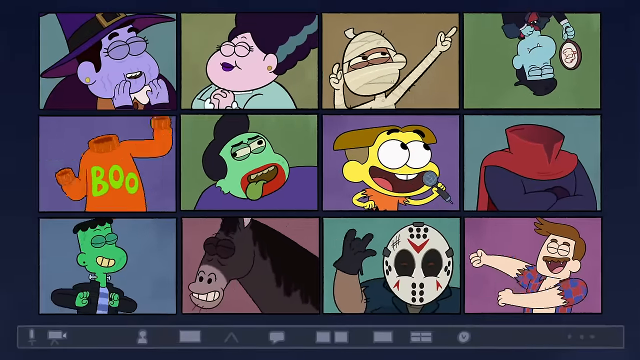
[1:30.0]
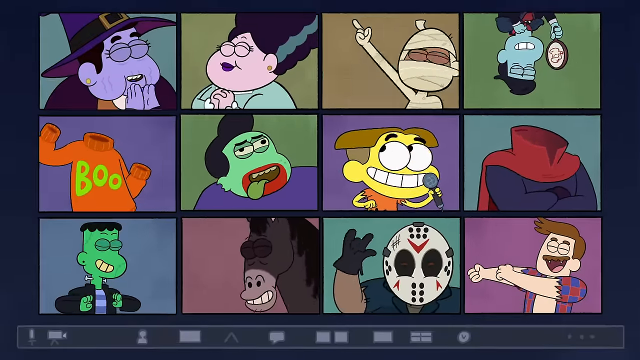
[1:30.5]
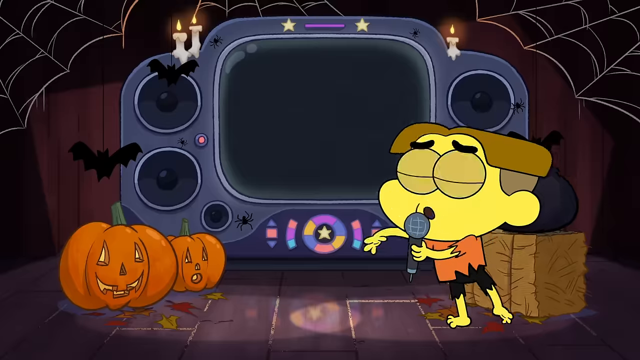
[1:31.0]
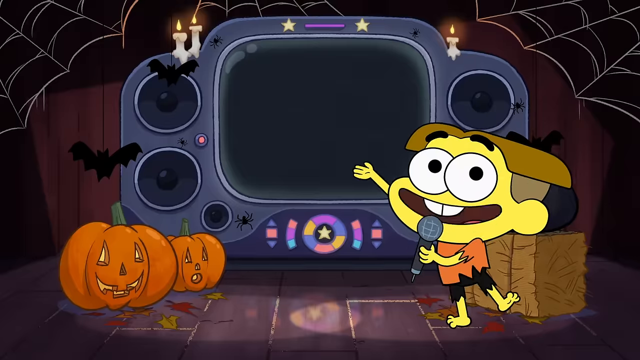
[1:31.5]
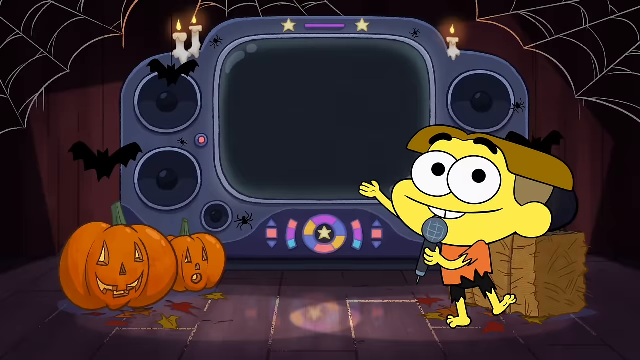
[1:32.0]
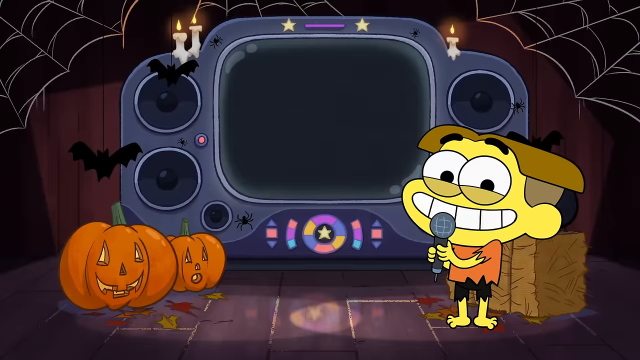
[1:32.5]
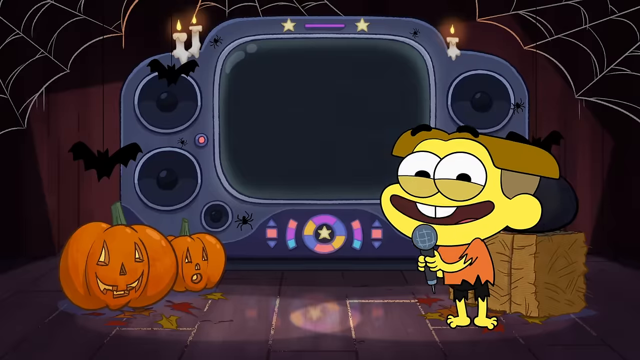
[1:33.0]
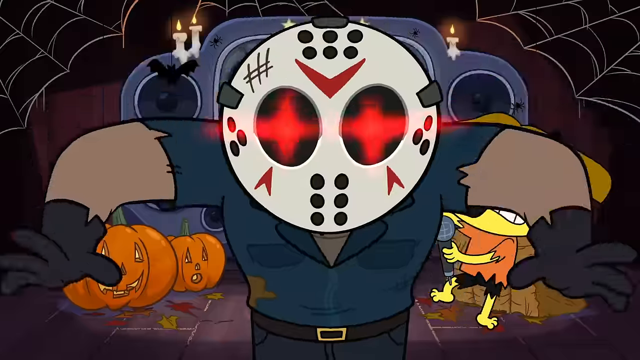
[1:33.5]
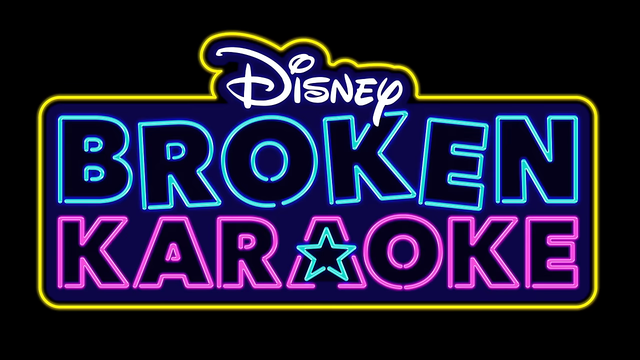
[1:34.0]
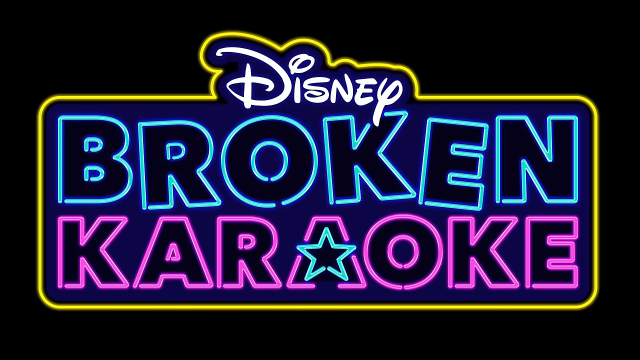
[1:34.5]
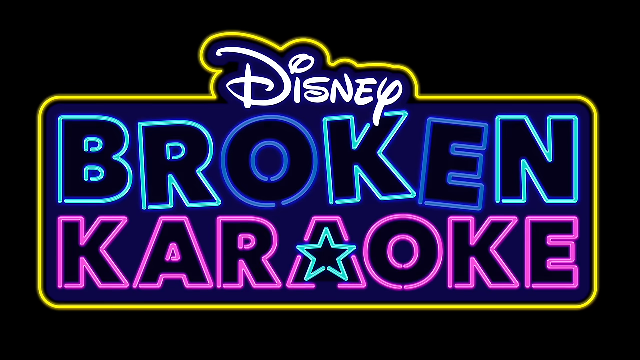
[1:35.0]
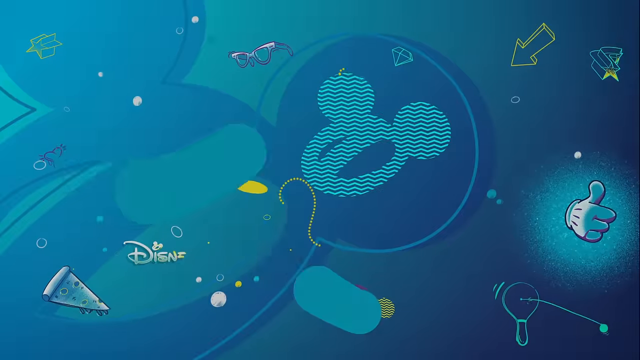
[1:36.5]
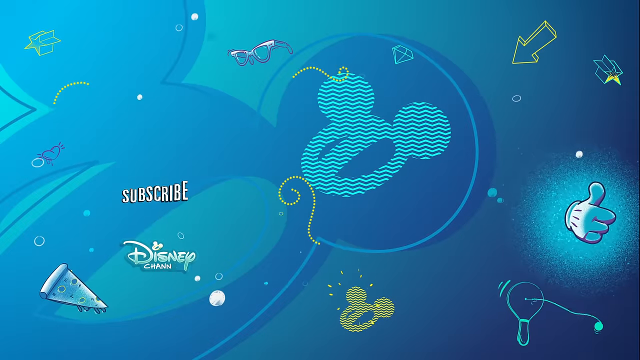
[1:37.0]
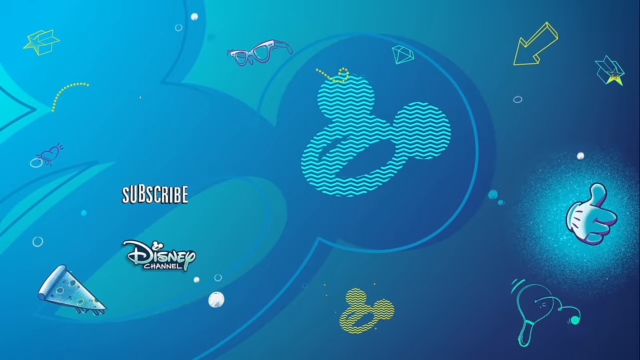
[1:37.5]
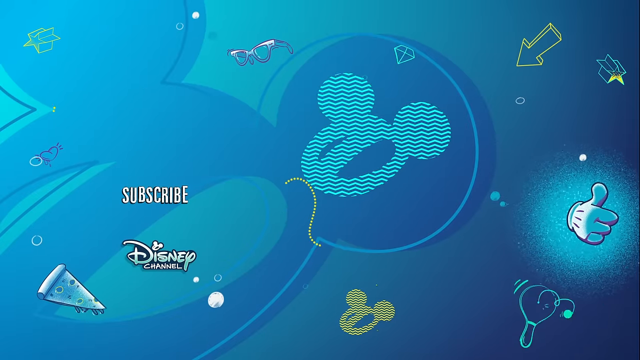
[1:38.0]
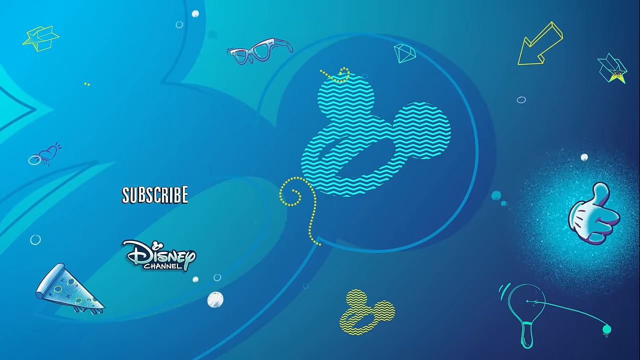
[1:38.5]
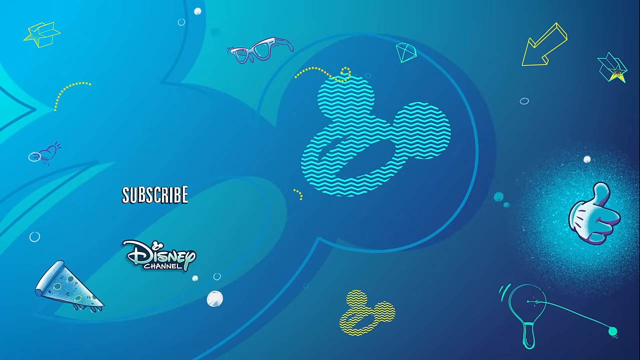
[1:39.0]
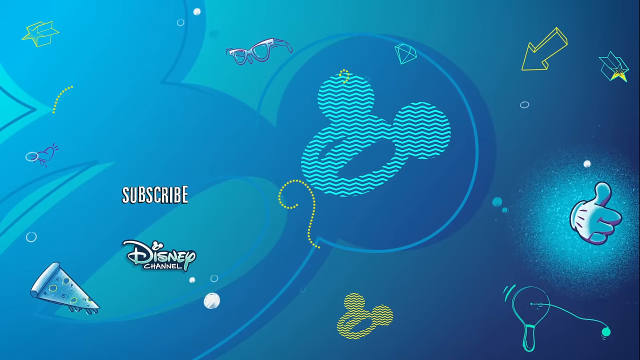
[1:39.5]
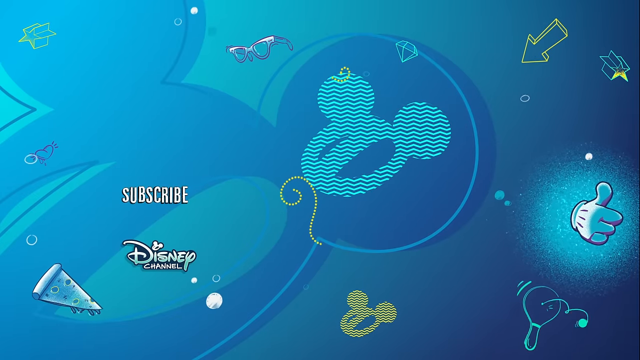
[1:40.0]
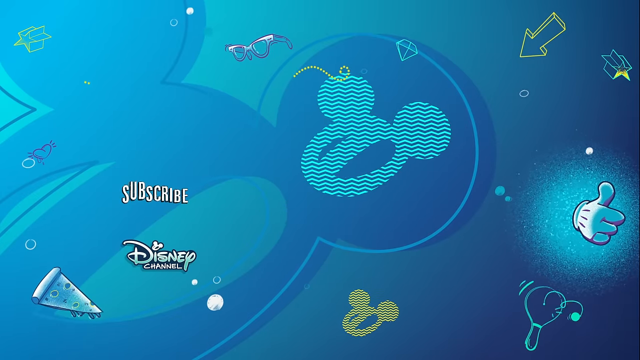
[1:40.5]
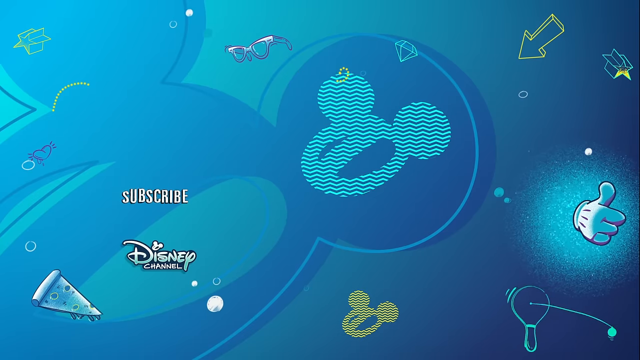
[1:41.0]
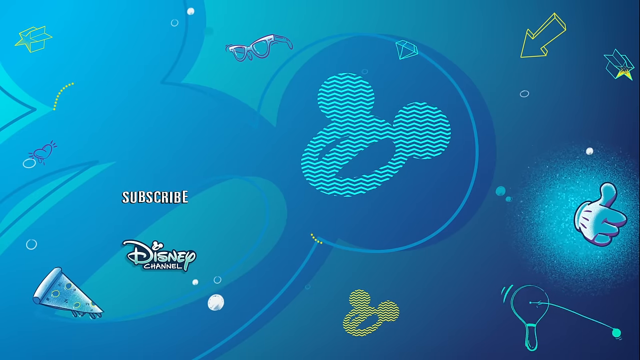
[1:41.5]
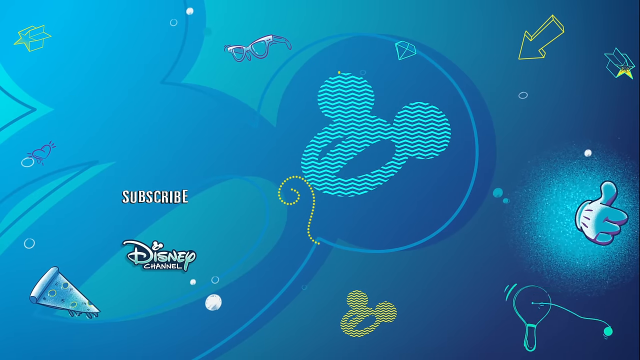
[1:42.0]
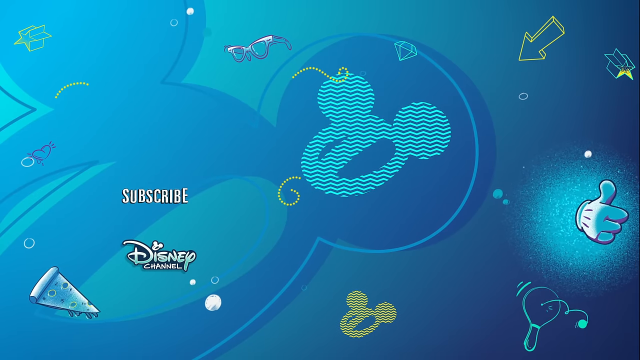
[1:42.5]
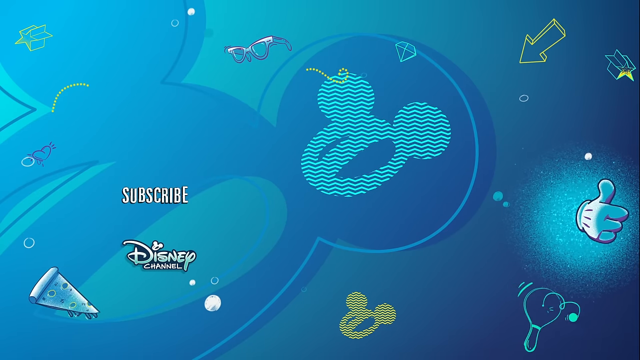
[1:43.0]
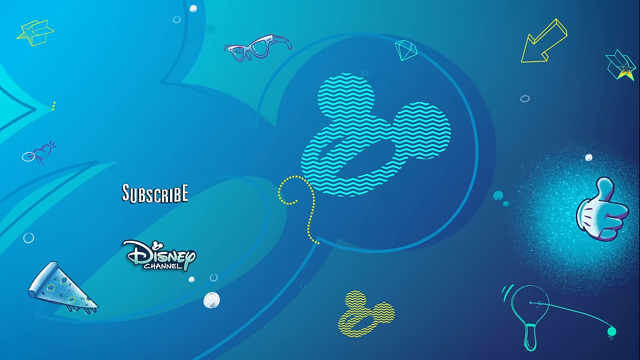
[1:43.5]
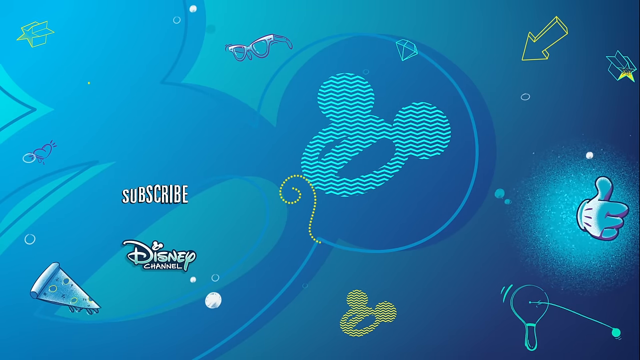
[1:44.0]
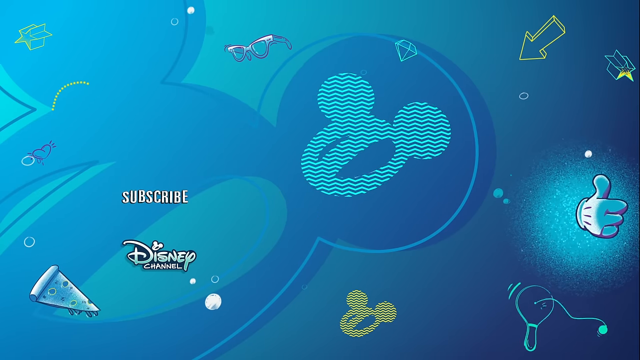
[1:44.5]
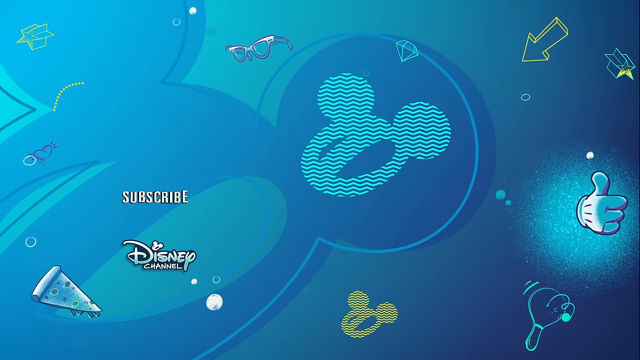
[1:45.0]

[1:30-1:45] All 12 members of the group singing the song are shown: in the top left a witch, then a character who looks like Cruella de Vil, a mummy, Dracula, a sweater with the word "boo" on it and no arms or legs coming out of any hole, a Frankenstein's monster, the kid holding a microphone to his mouth, kind of a headless horseman, another Frankenstein's monster, a regular horse, Freddy Krueger, and the werewolf who has been transformed into a man after a vigorous haircut. They are all singing, dancing, bobbing and kind of moving their arms and legs as if singing together. It cuts back to the kid in the original scene, with the pumpkins on the bottom left, the cobwebs coming from the top, and the karaoke-player-looking thing in the middle, and he sings his song. Finally a logo comes up that says "Disney broken karaoke", which appears to be the name of the TV show or segment.